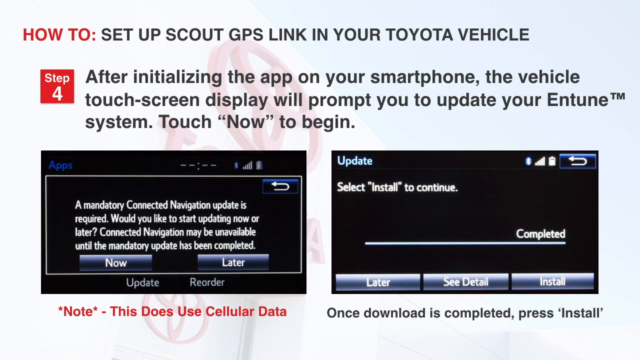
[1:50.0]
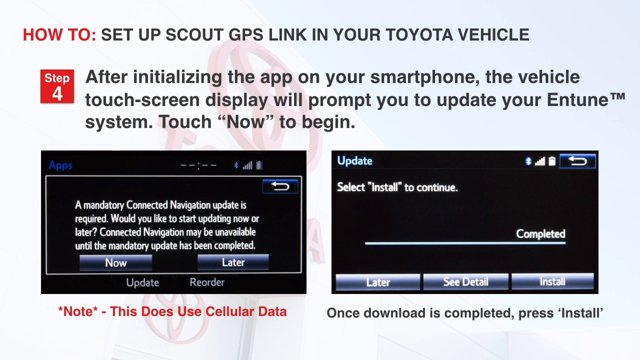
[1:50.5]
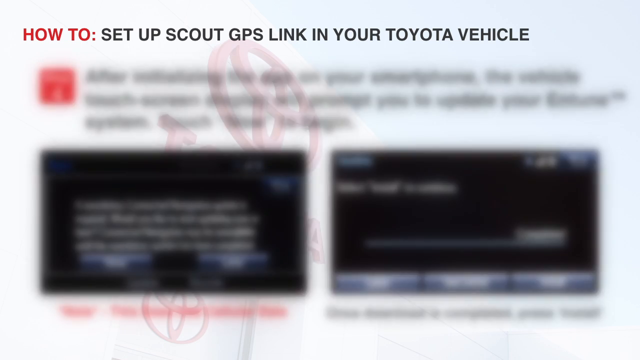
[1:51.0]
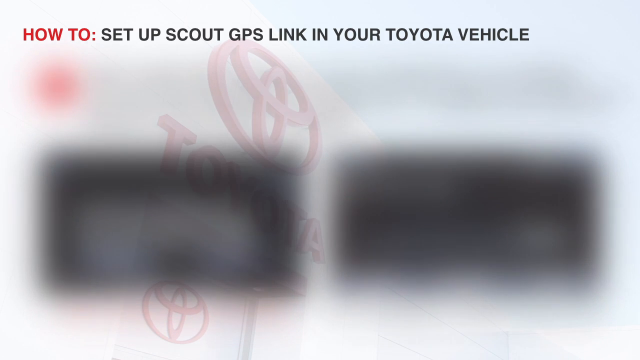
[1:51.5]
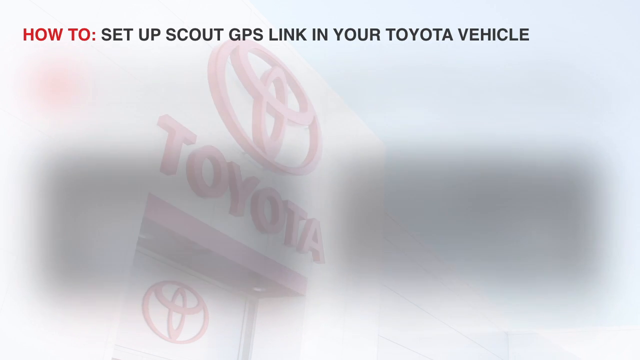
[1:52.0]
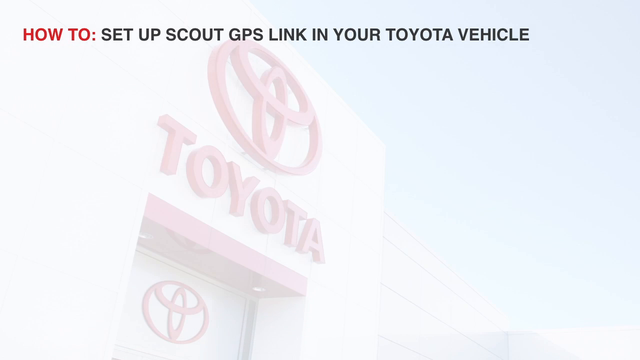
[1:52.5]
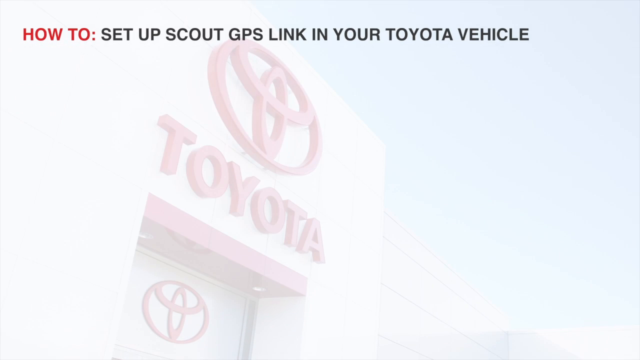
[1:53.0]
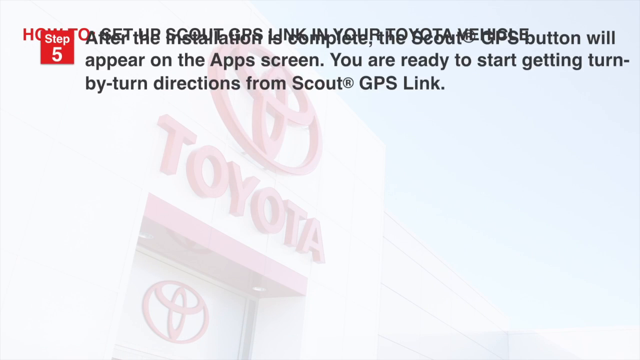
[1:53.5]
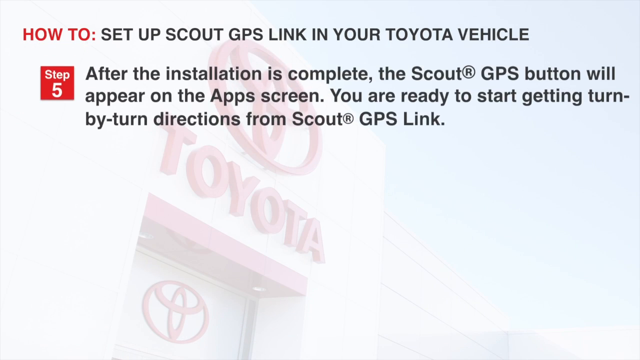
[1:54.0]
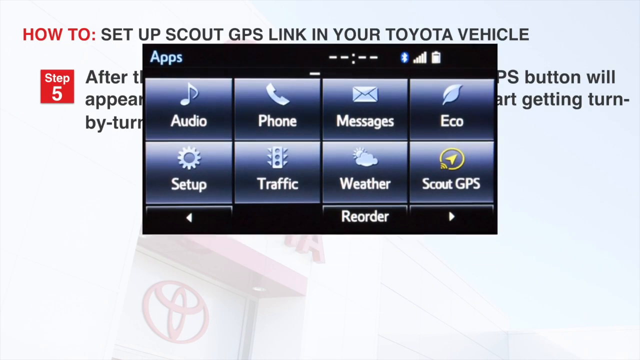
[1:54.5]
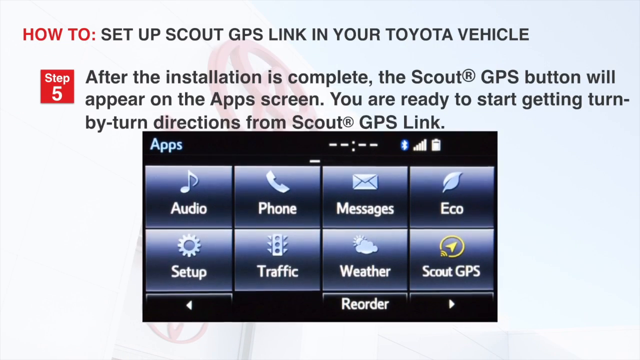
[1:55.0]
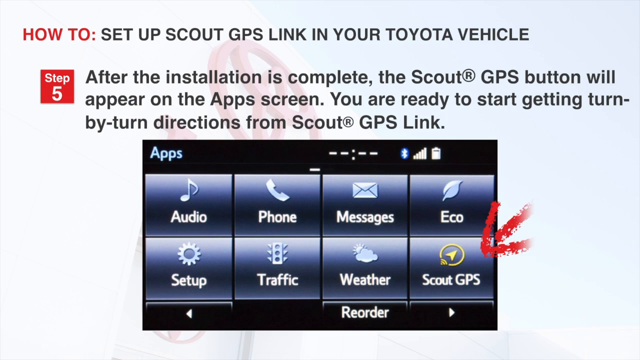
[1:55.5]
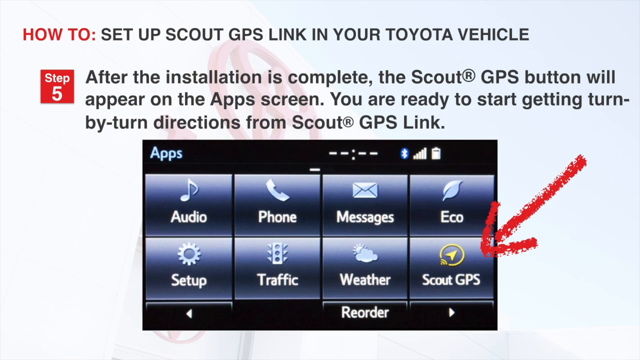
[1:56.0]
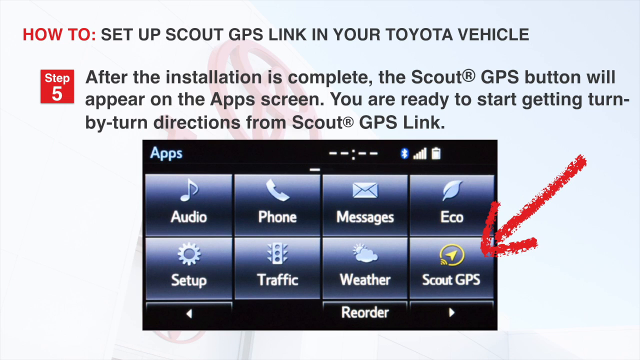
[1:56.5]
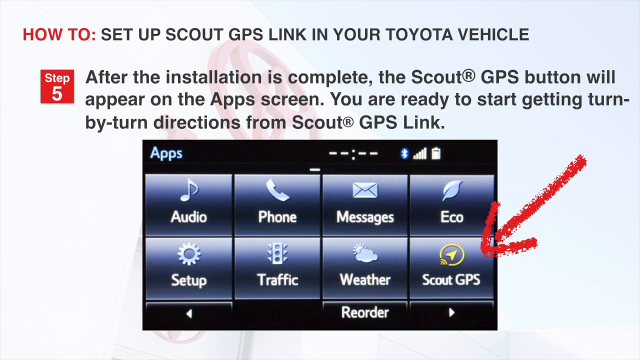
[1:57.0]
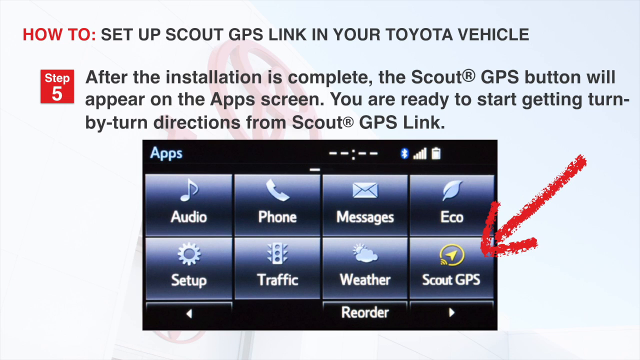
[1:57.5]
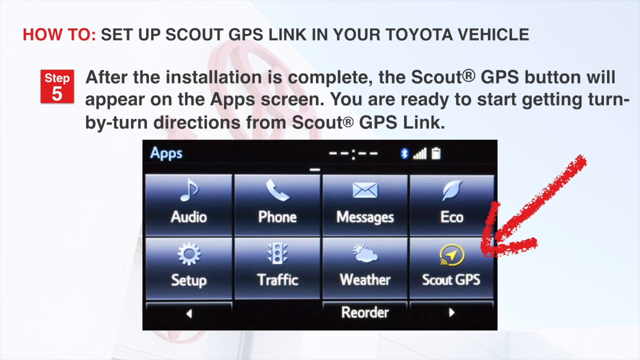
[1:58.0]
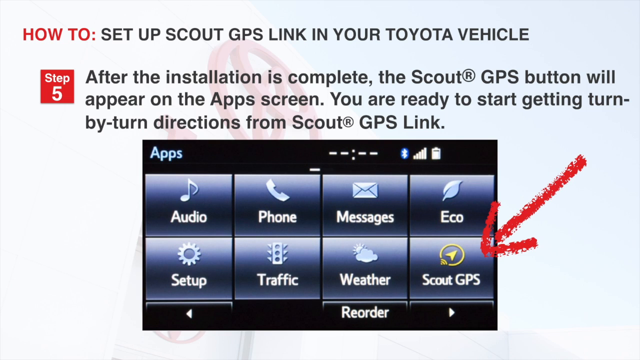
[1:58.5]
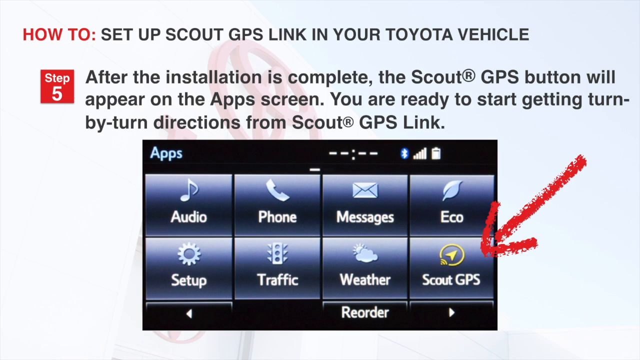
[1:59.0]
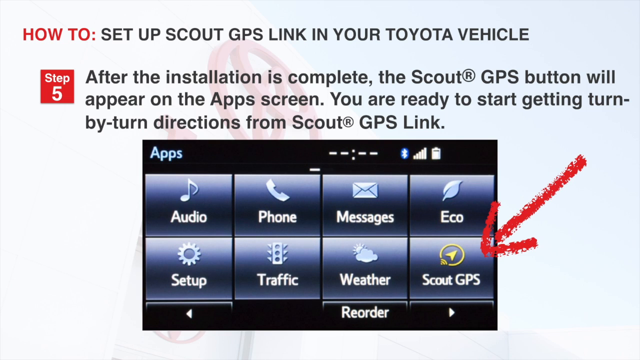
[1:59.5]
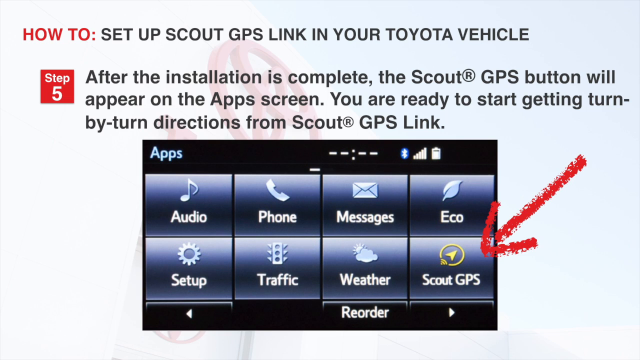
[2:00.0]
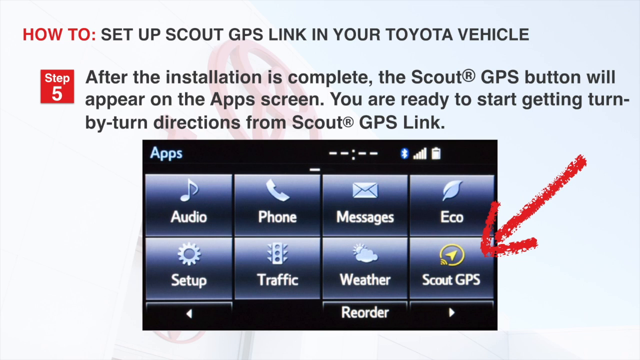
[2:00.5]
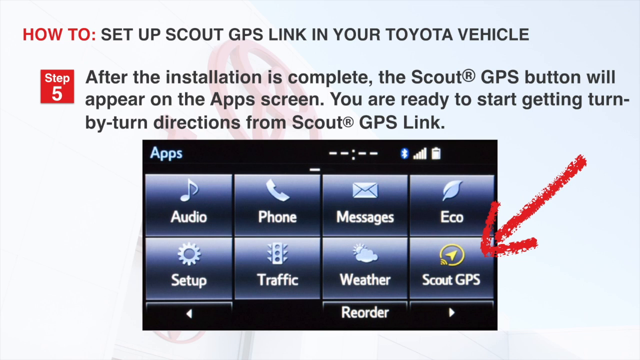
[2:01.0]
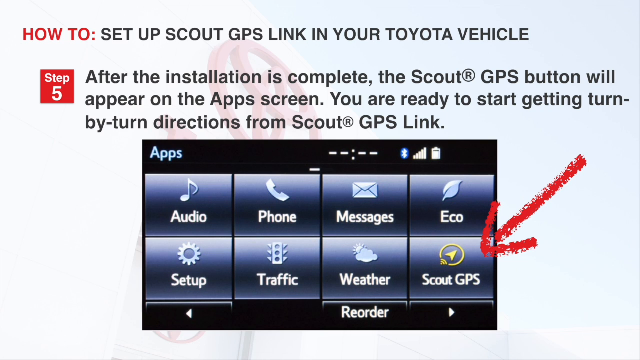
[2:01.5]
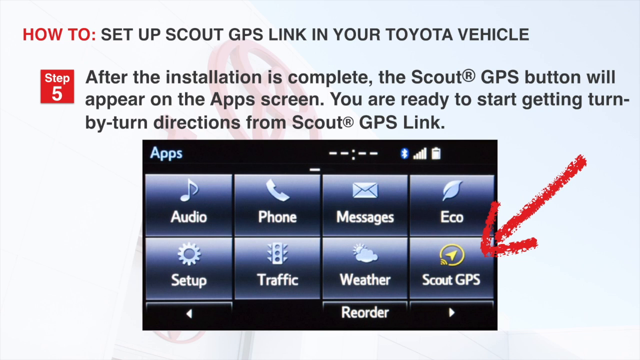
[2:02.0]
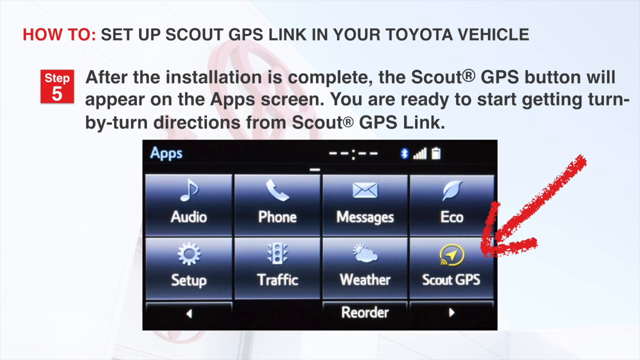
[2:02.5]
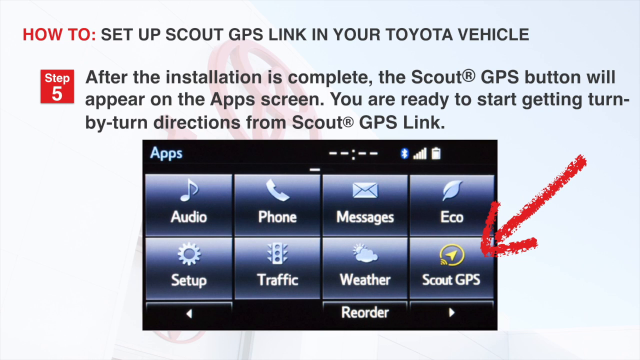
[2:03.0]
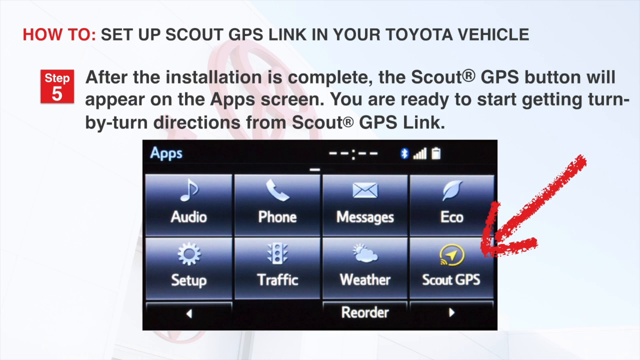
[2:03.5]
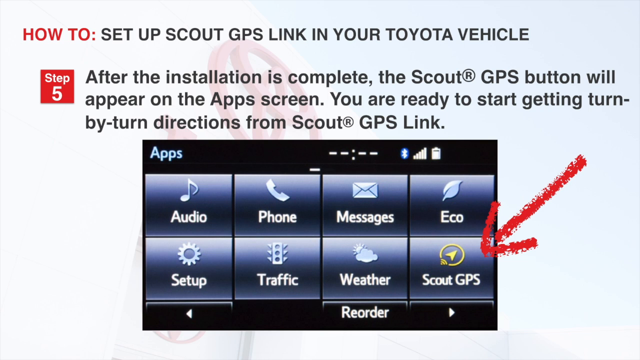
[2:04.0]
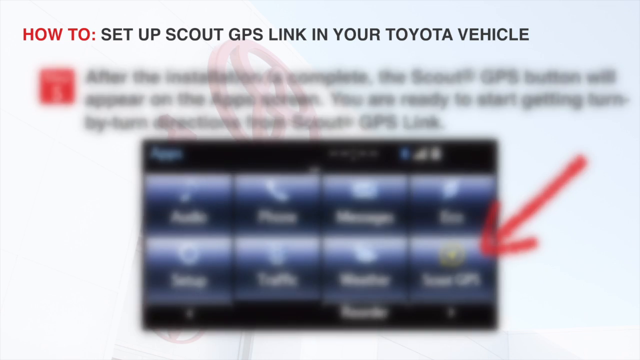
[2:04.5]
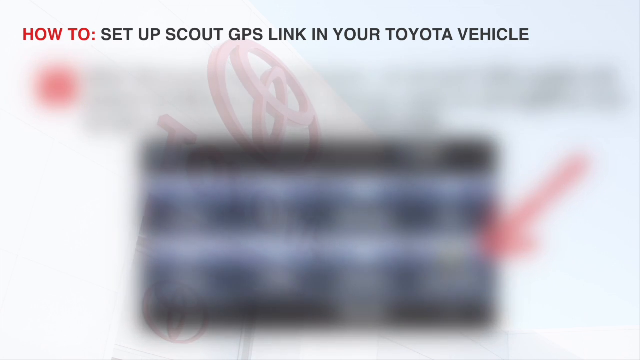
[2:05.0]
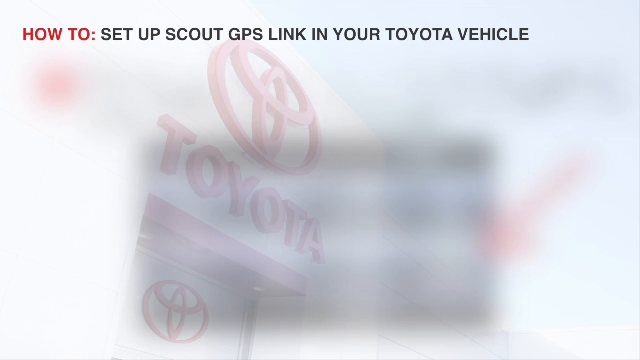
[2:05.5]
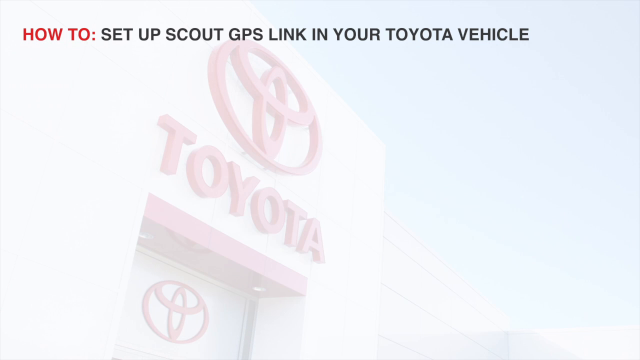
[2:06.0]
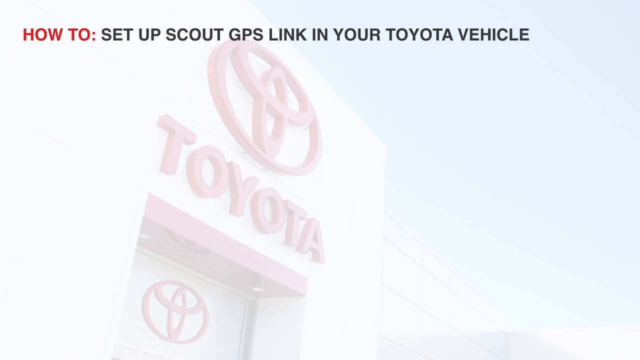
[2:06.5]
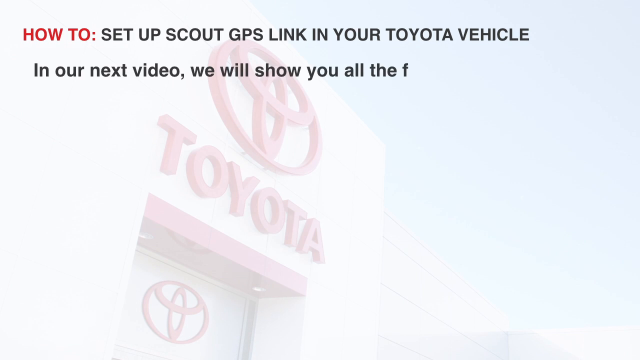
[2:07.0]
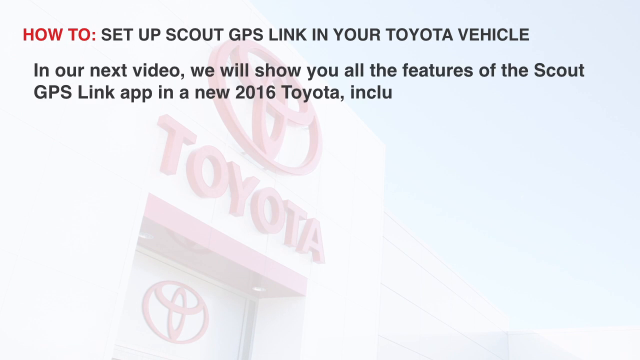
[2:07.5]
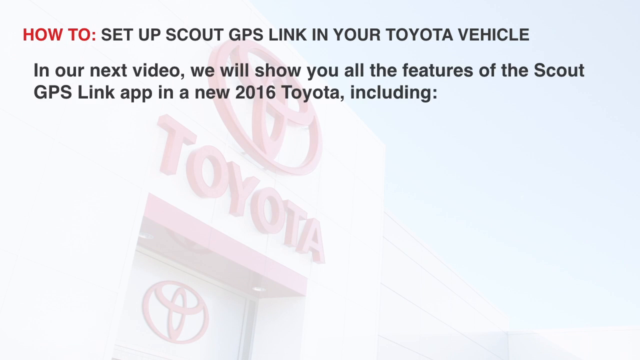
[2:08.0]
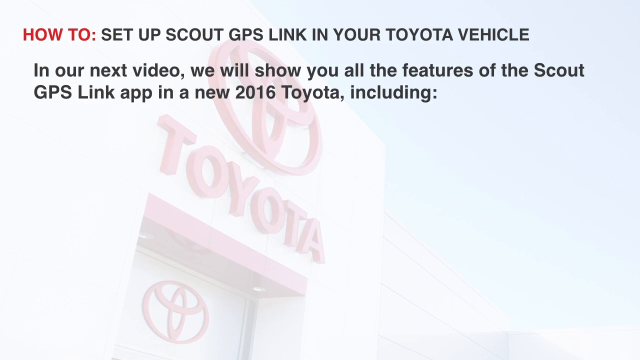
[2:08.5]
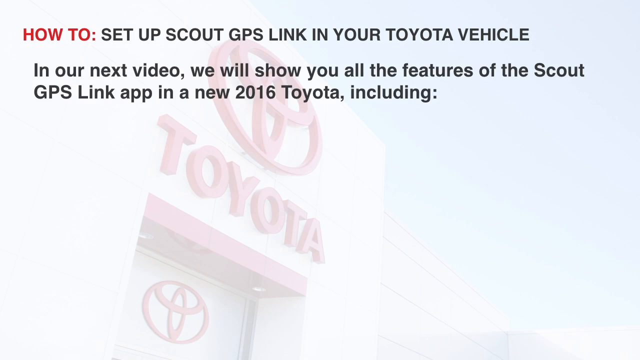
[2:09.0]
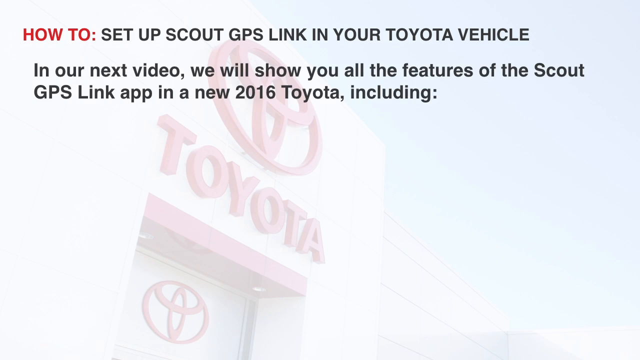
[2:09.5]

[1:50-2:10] Step four is shown for a little longer before the presentation moves to step five. Next to "step 5" at the top left, text reads "after the installation is complete, the Scout GPS button will appear on the app screen. You're ready to start getting turn by directions from Scout GPS Link." A red arrow points to Scout GPS, which has a yellow navigation arrow icon with "Scout GPS" written right below it. There is also a reorder button, along with two arrows pointing left and right at the bottom. The video then quickly moves to a regular screen that is not a step, reading "in our next video, we will show you all the features of the Scout GPS Link app in a new 2016 Toyota including."